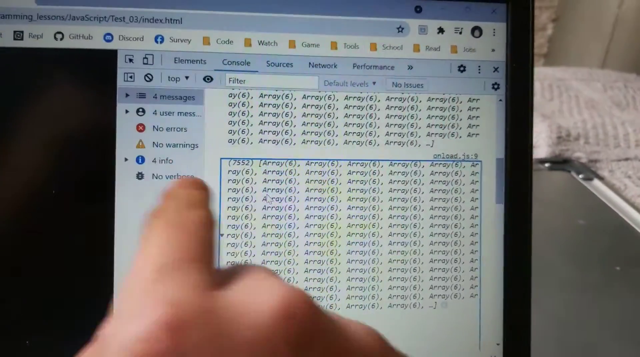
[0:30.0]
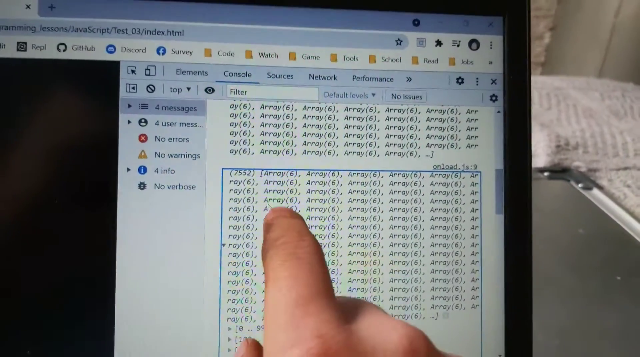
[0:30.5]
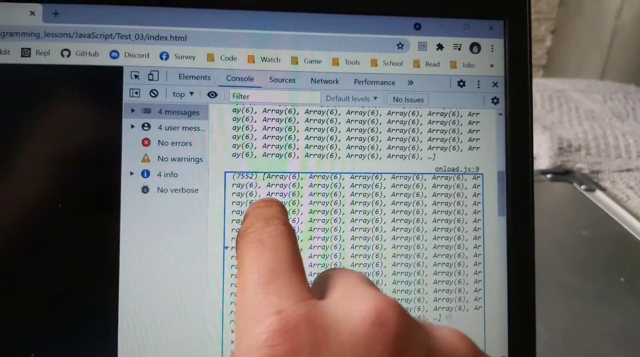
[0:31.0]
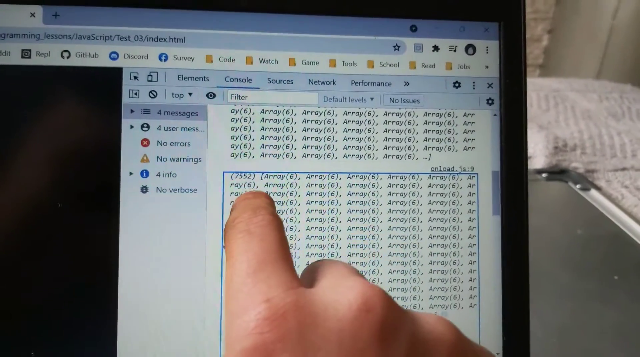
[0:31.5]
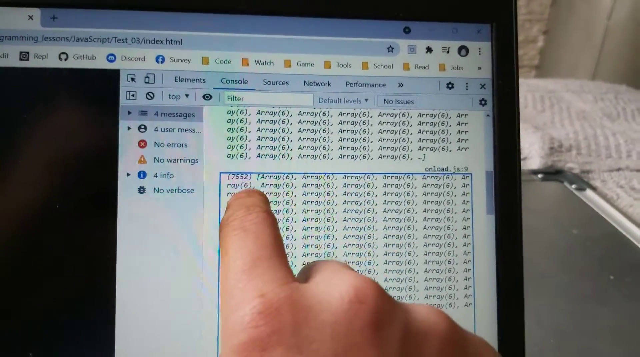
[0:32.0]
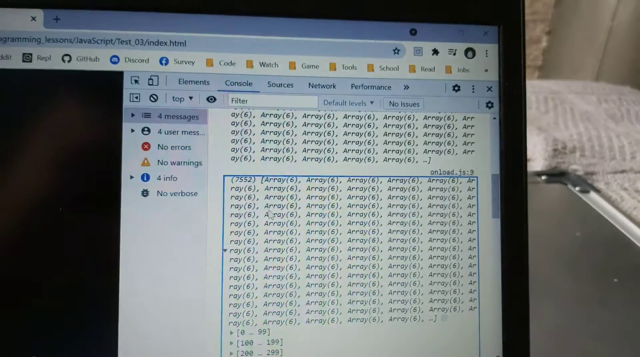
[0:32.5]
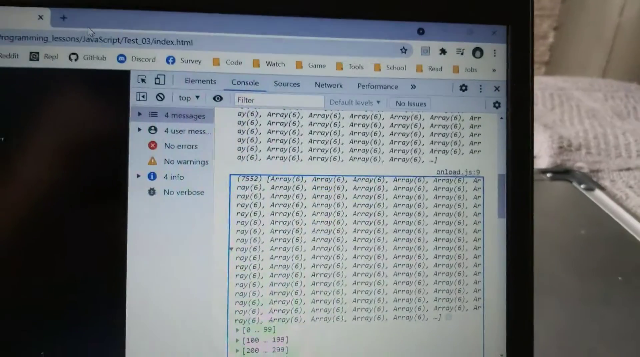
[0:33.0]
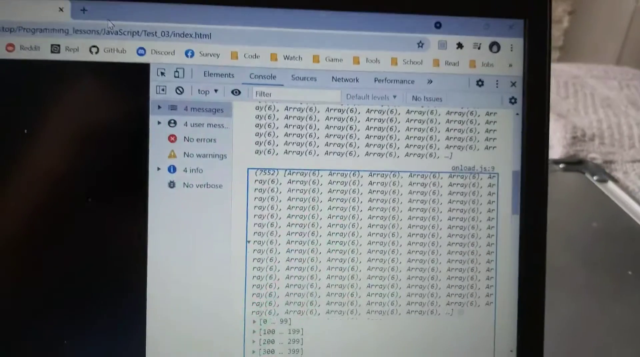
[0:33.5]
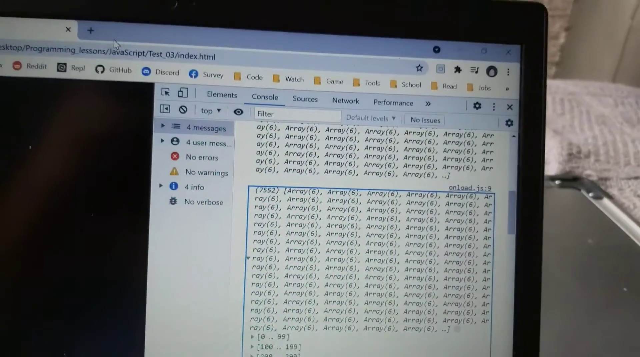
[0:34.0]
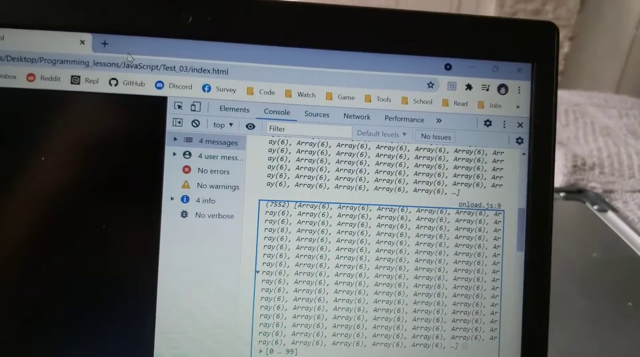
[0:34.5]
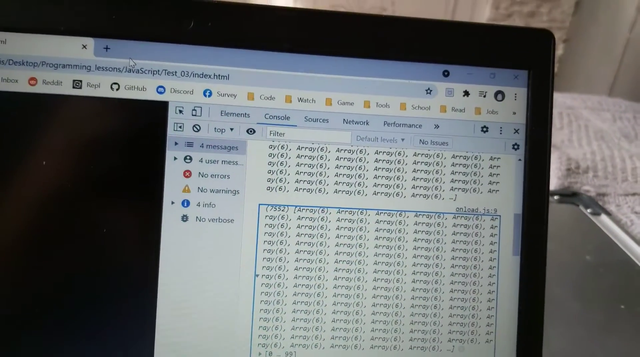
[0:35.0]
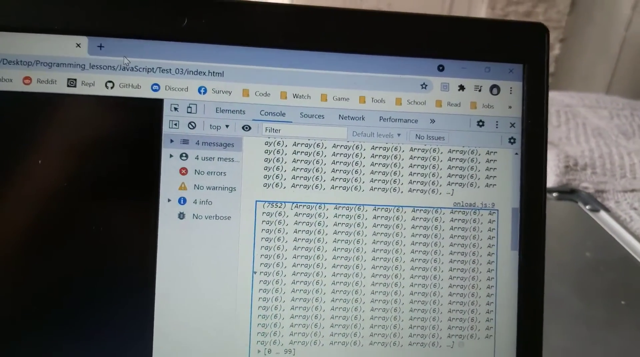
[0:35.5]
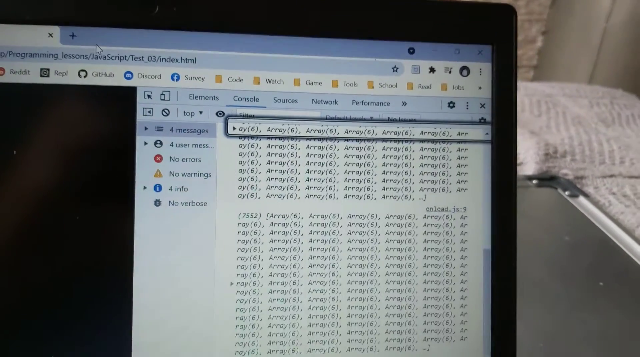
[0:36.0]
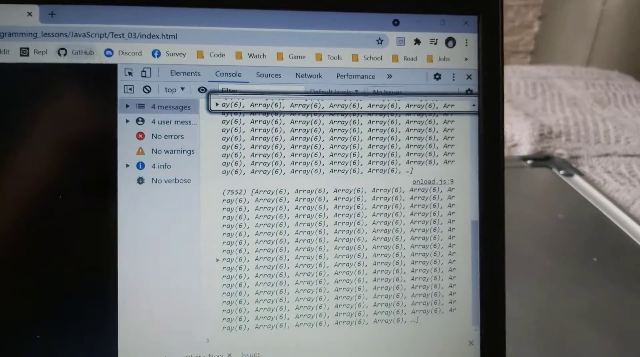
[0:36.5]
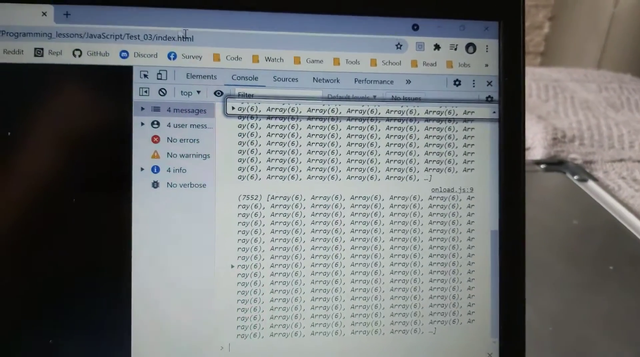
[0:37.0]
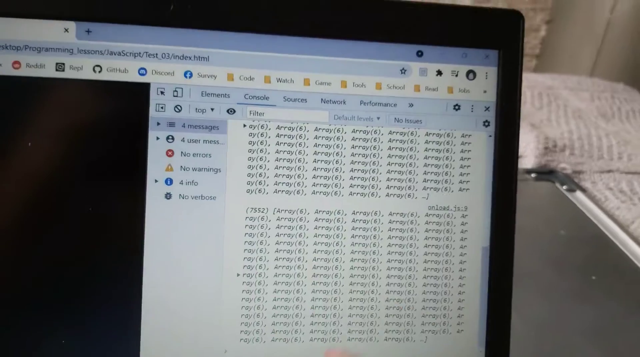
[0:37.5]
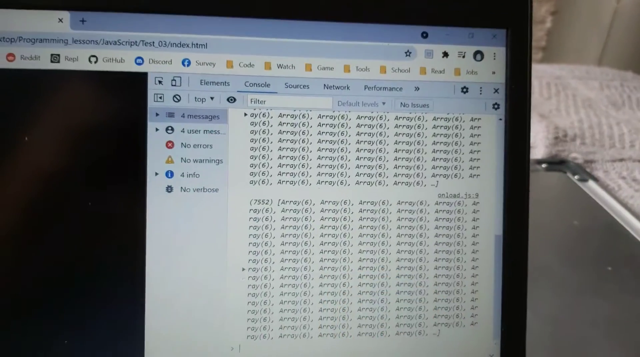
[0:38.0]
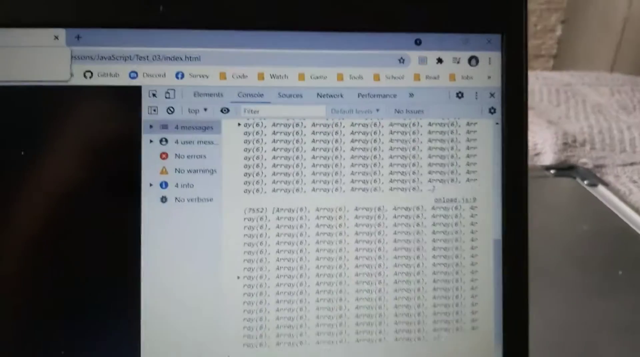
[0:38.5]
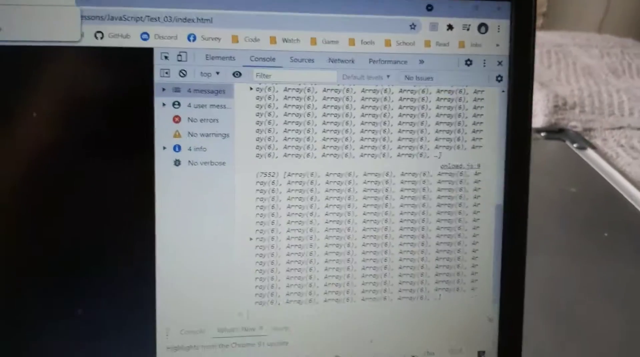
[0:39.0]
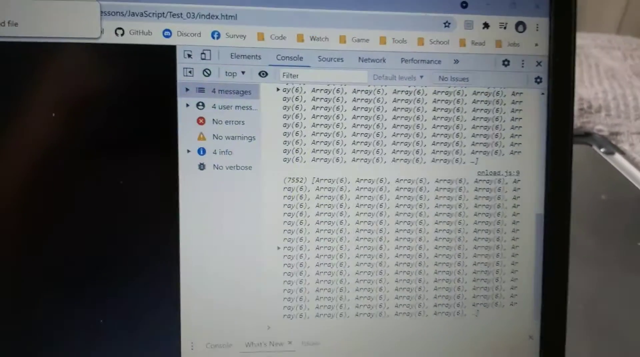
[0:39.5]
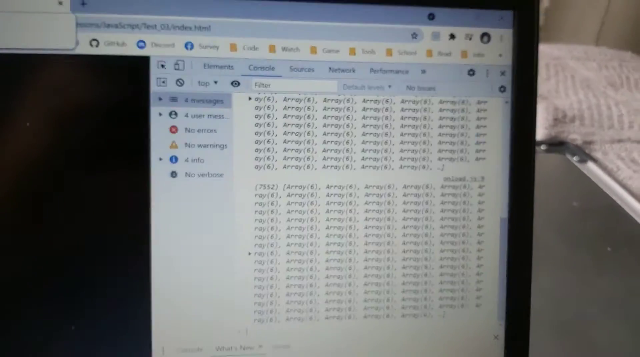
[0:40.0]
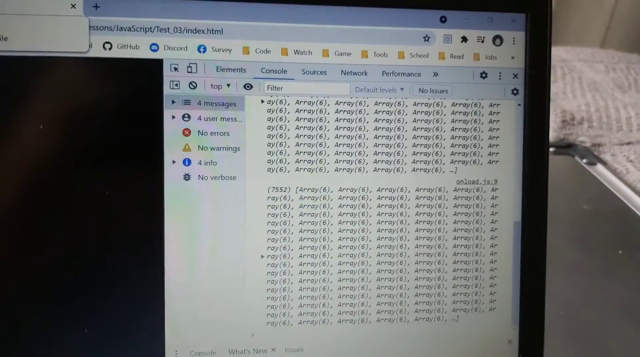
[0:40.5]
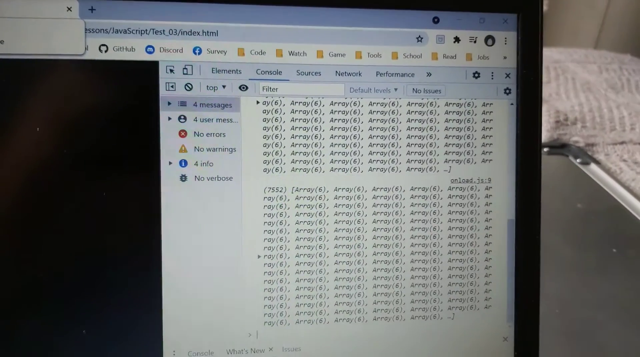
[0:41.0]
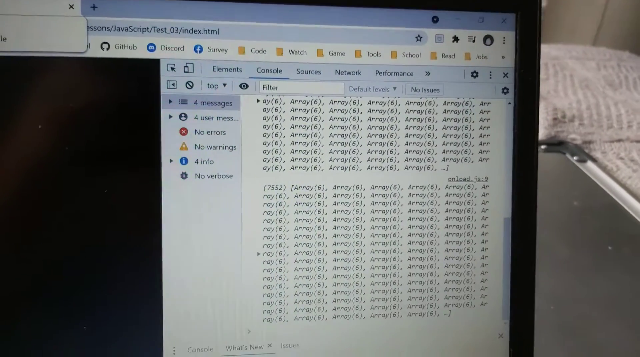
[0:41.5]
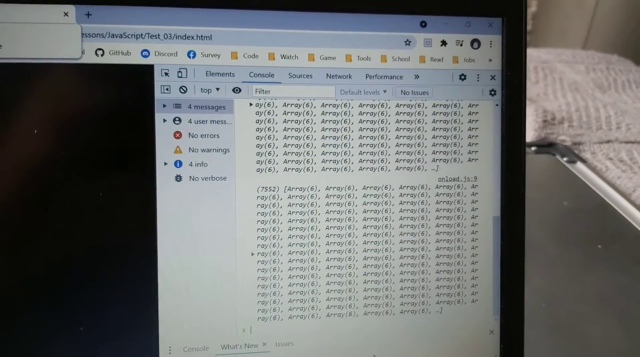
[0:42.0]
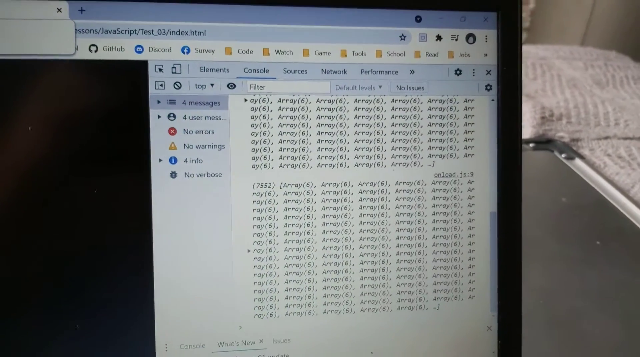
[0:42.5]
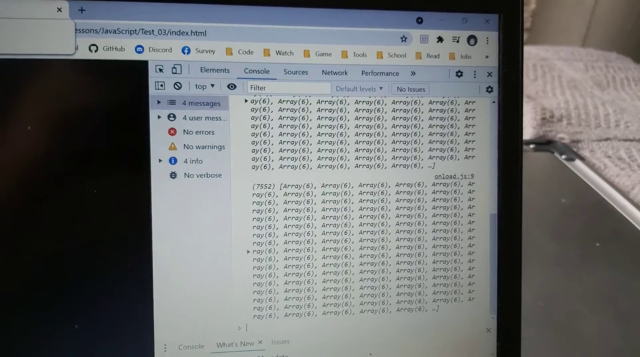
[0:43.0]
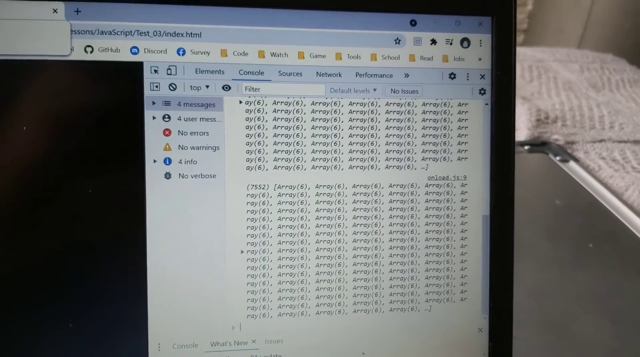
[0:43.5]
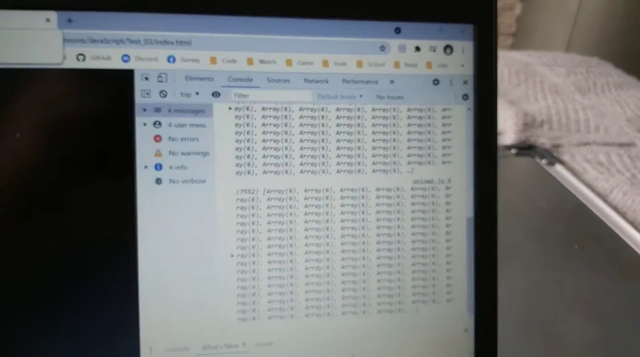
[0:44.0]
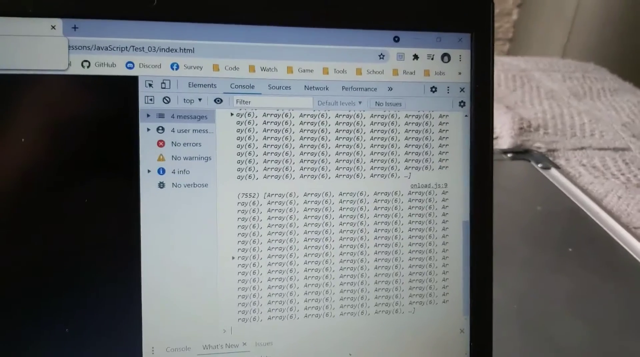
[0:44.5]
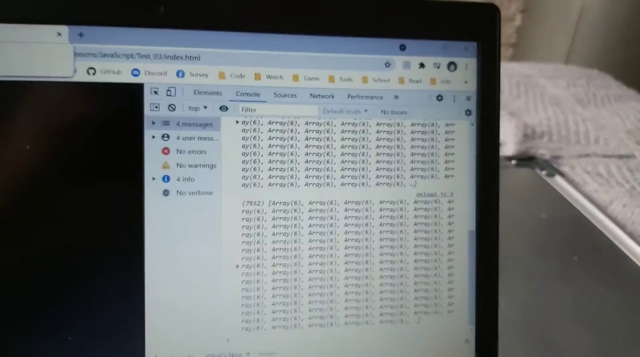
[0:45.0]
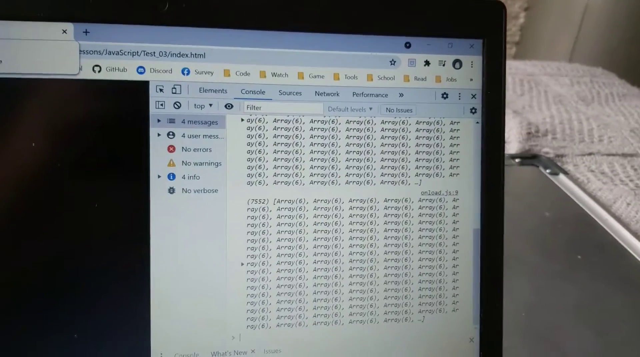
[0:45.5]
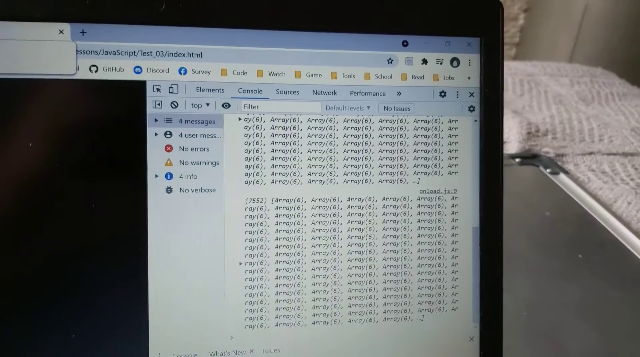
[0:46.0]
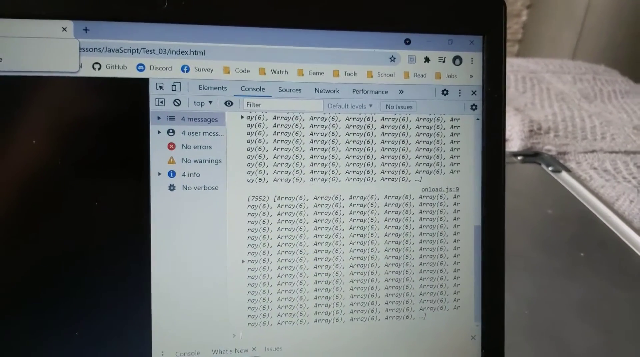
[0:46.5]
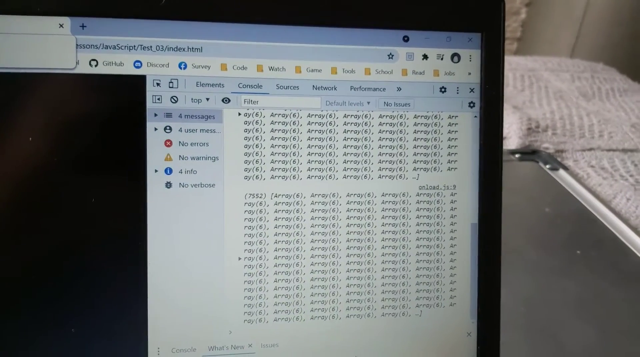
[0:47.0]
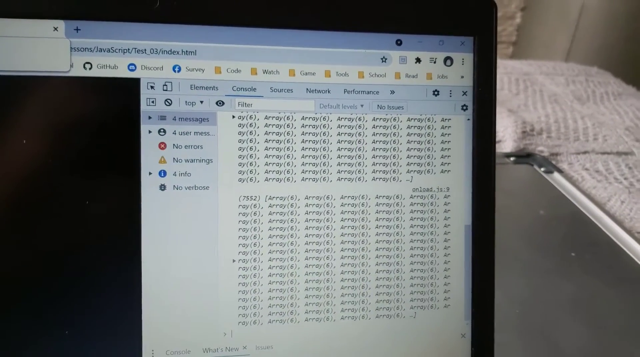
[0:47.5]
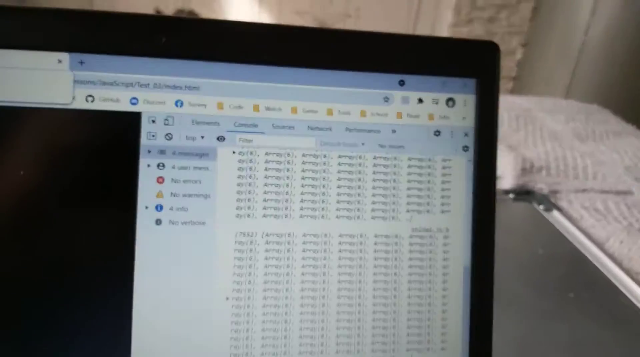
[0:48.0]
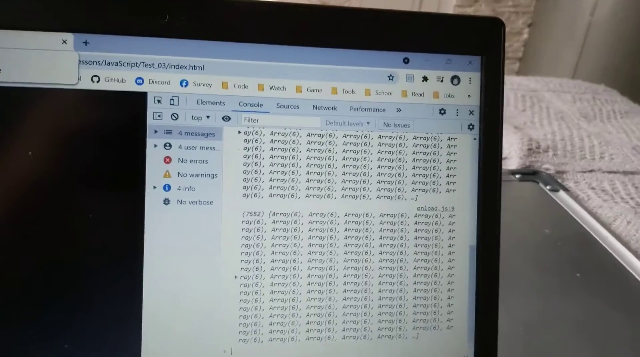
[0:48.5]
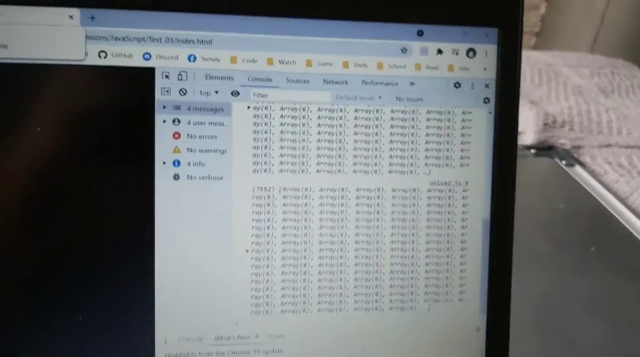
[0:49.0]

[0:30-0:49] An open laptop is placed on what might be a bed, with a white chenille blanket in the background and light wood paneled walls. A man's right hand is up at the screen, touching it and opening up information. The word "array" appears in what is apparently a musical arrangement. The hand touches different areas and scrolls. On the left side are the words "no errors", "no warnings" and "no verbose". The hand moves rapidly down out of the frame and then comes back up, perhaps changing the musical arrangement. Folders are open along the top with the words "code" or "tabs", "watch", "game", "tools" and "school", and on the left there are other tabs for "discord" and "survey", as well as one that might say gift hub or grub hub.